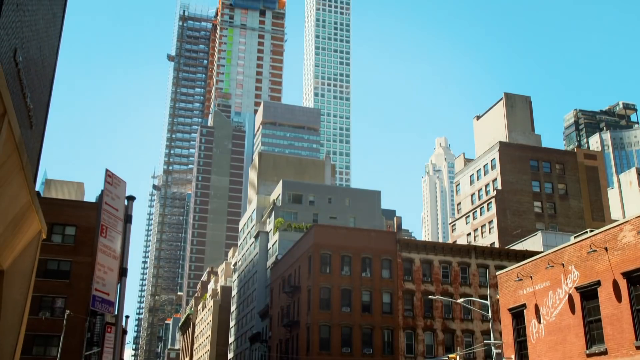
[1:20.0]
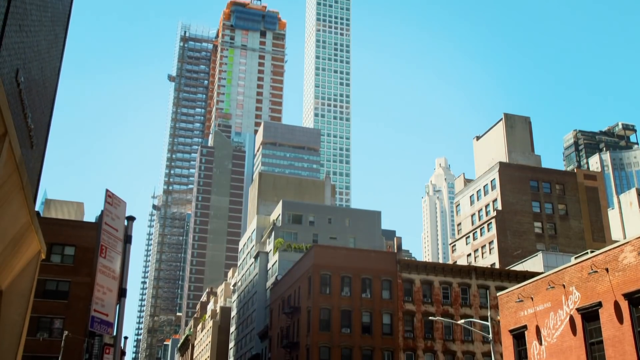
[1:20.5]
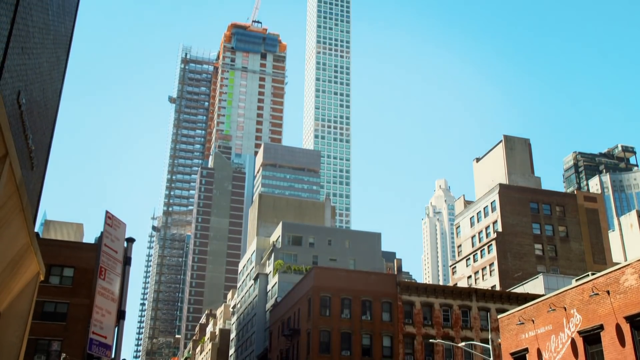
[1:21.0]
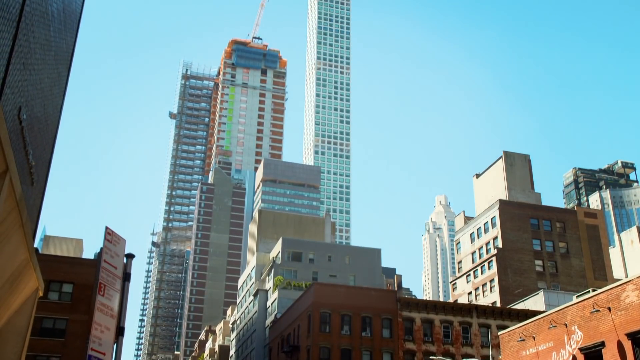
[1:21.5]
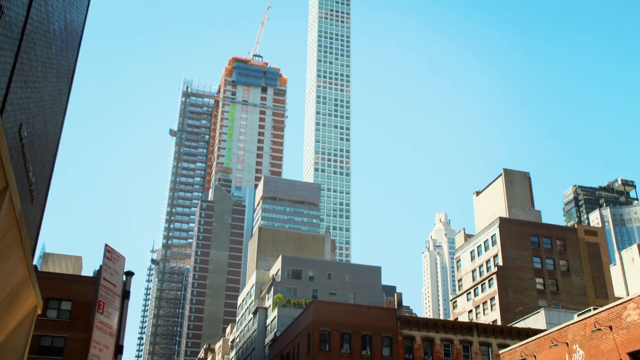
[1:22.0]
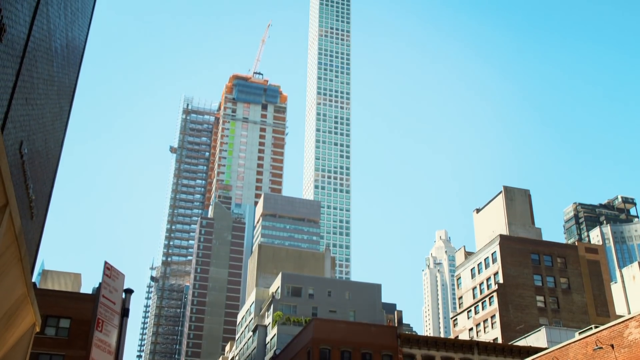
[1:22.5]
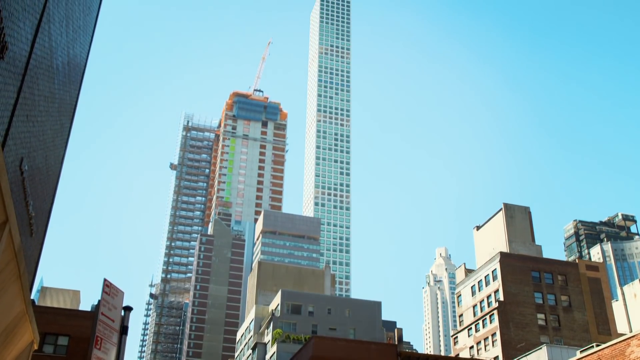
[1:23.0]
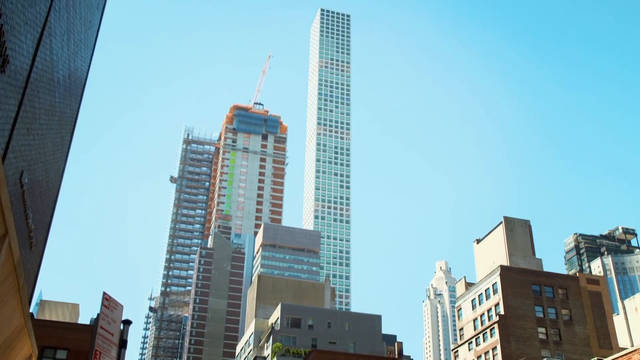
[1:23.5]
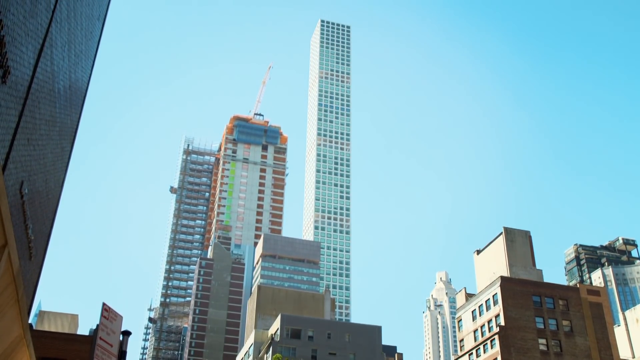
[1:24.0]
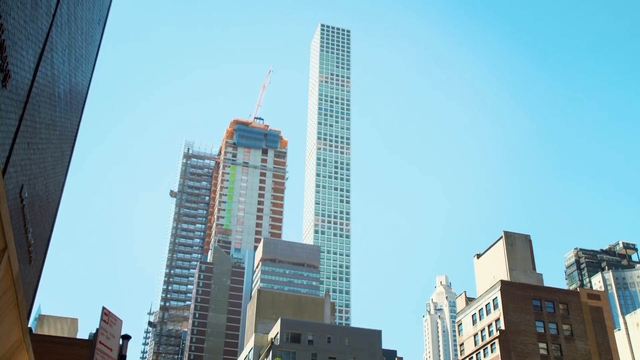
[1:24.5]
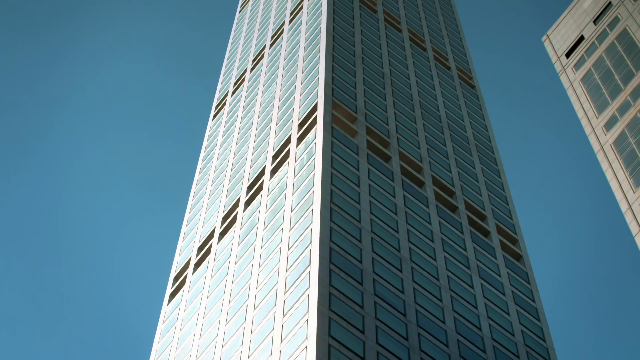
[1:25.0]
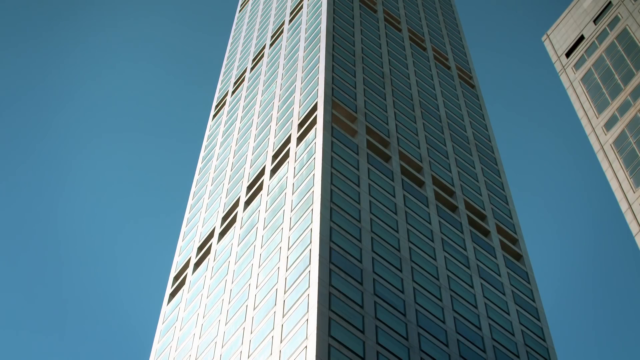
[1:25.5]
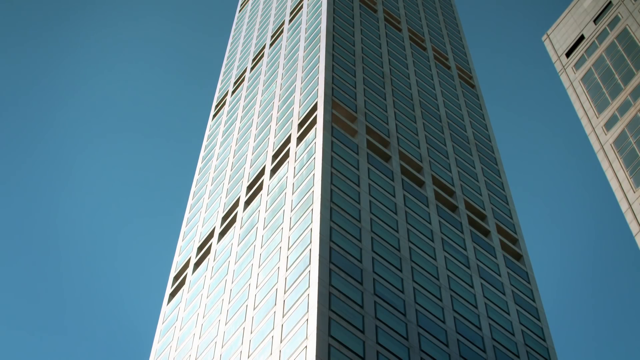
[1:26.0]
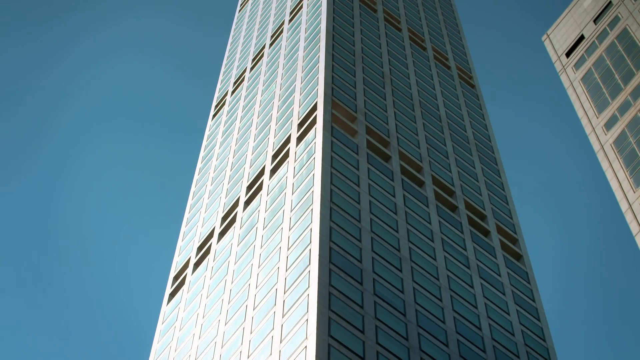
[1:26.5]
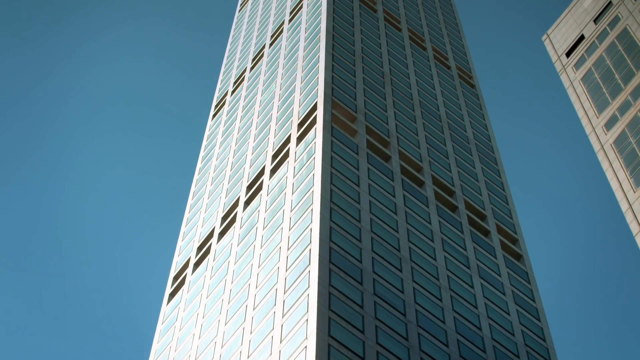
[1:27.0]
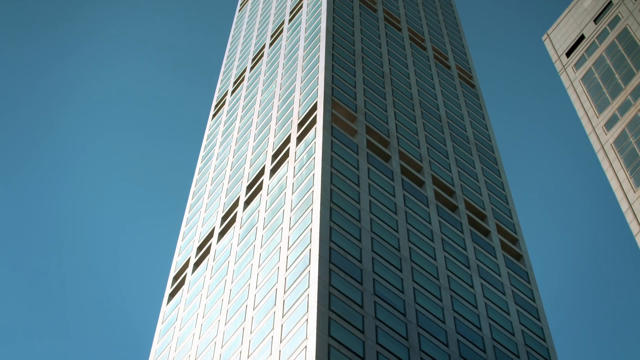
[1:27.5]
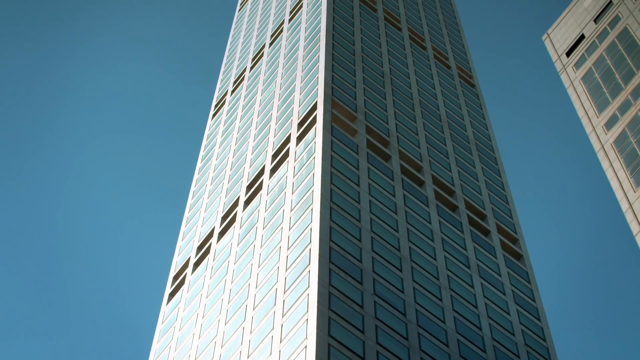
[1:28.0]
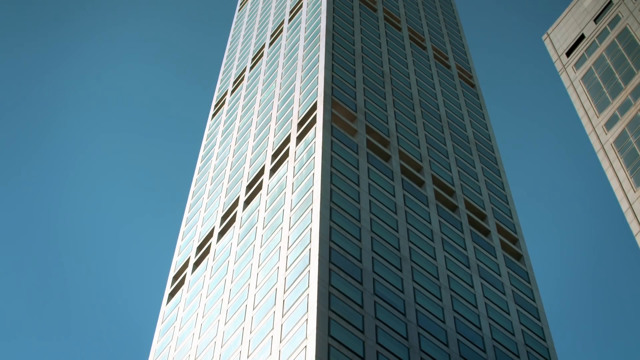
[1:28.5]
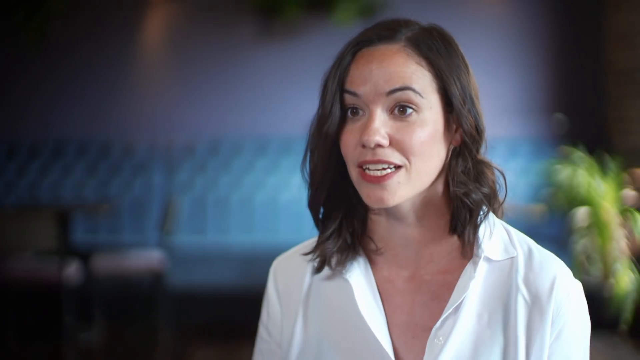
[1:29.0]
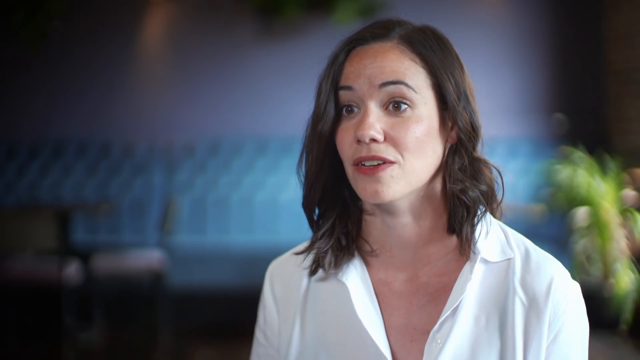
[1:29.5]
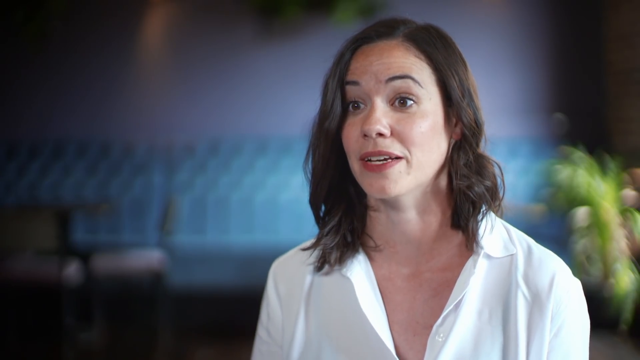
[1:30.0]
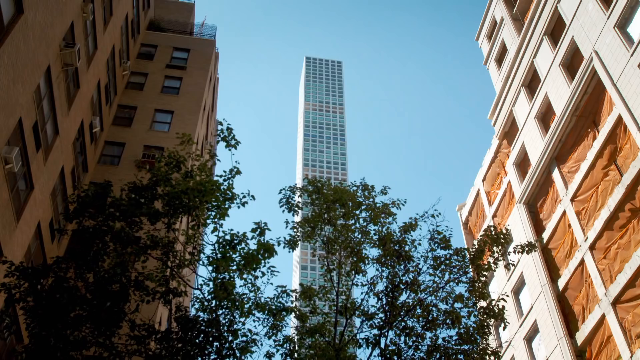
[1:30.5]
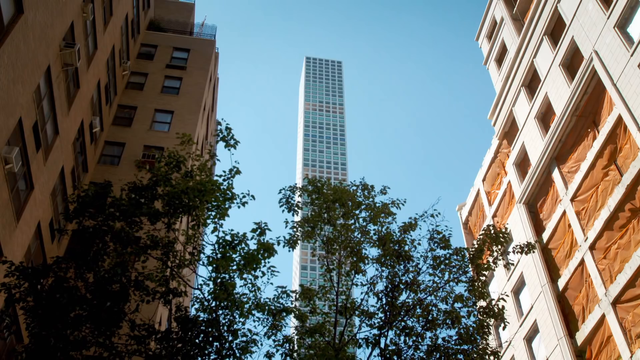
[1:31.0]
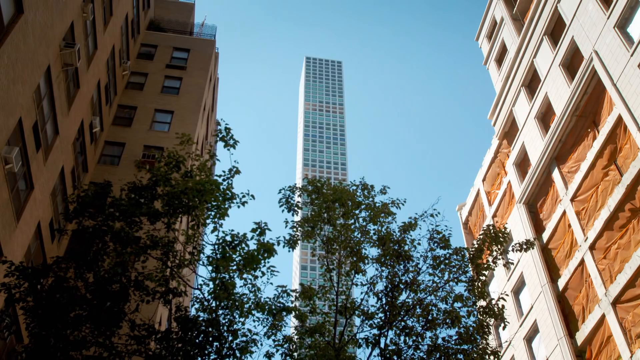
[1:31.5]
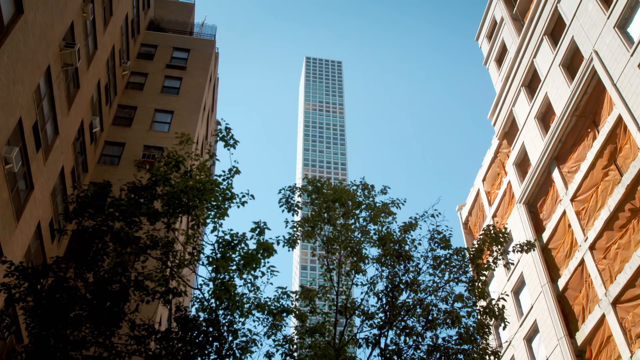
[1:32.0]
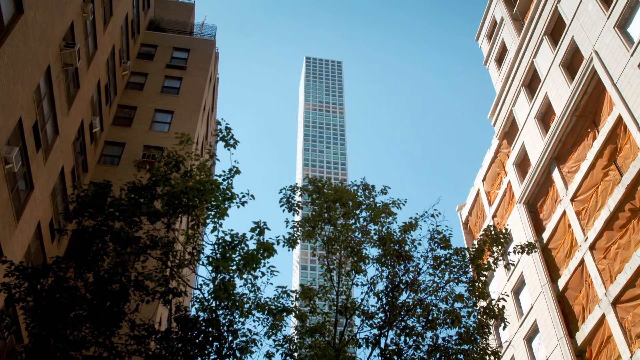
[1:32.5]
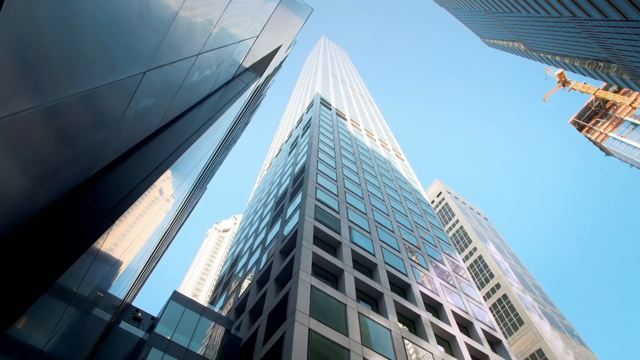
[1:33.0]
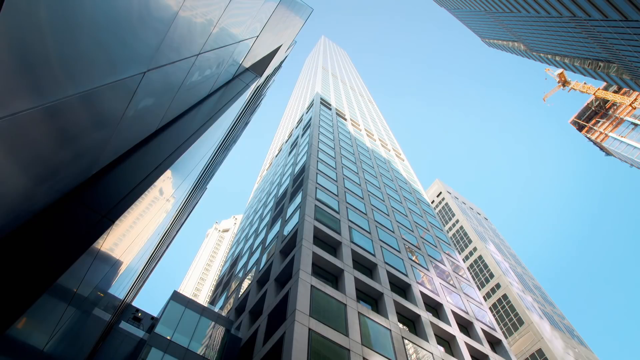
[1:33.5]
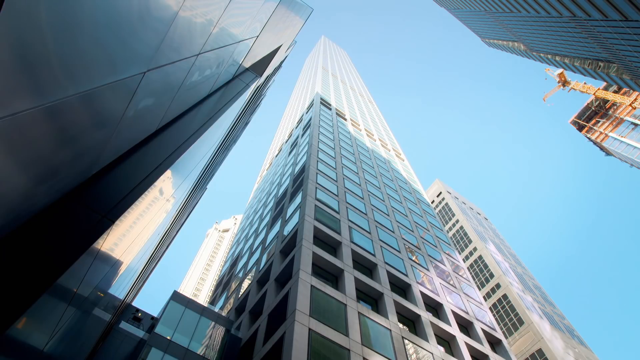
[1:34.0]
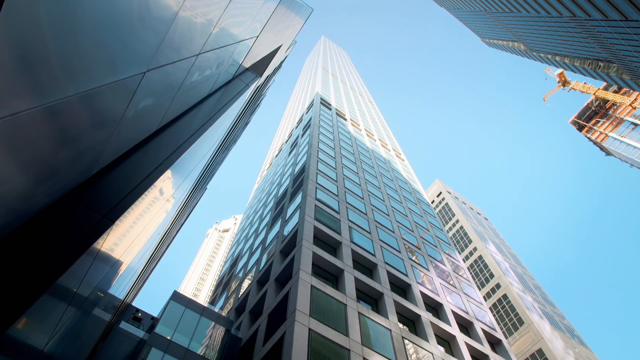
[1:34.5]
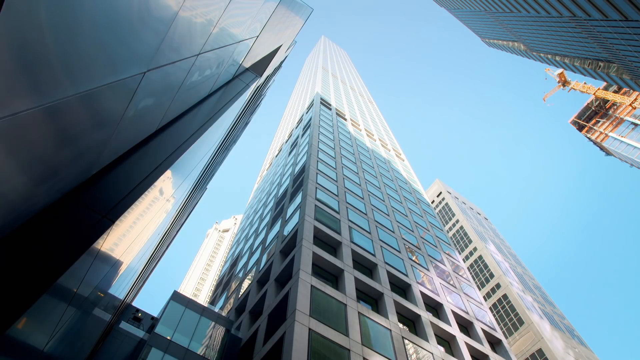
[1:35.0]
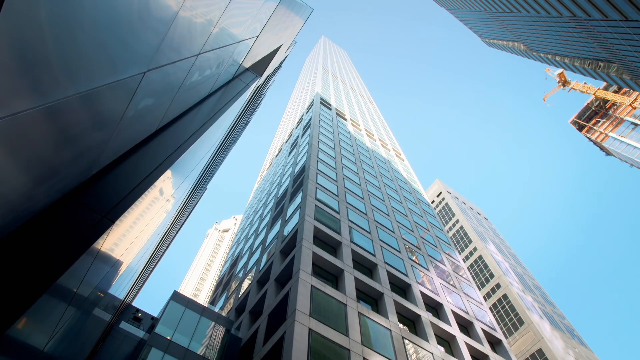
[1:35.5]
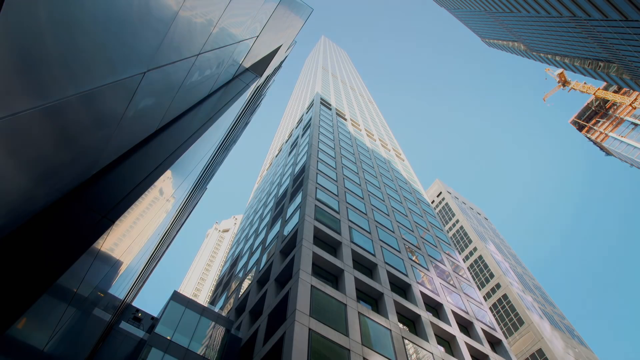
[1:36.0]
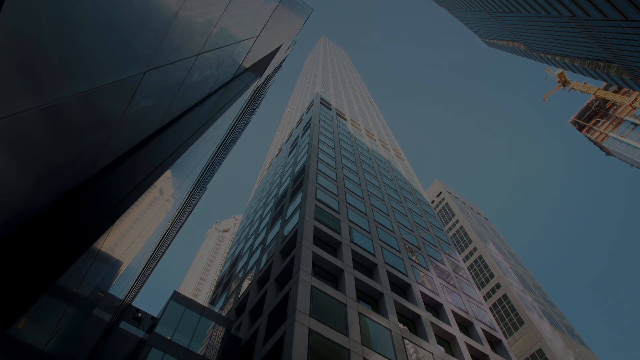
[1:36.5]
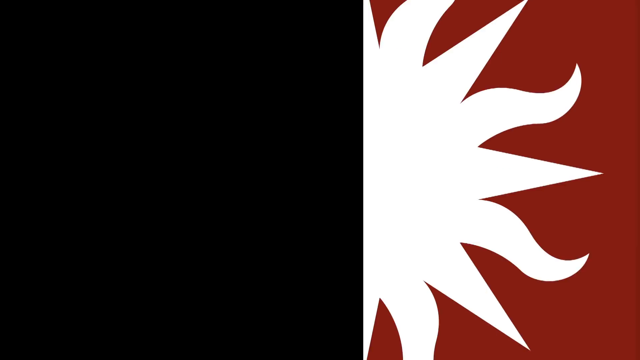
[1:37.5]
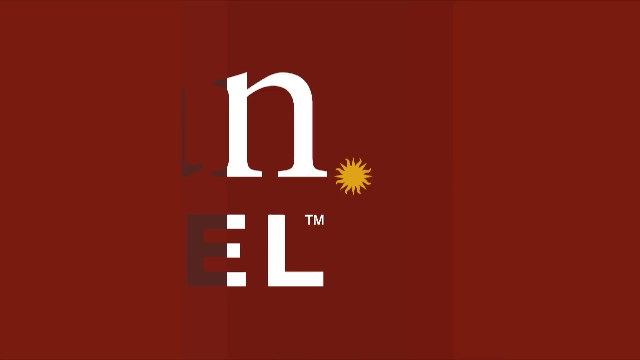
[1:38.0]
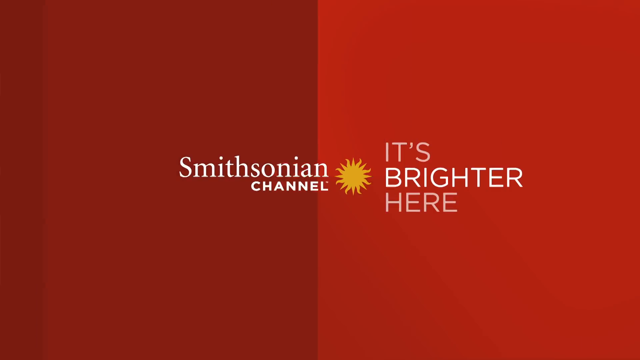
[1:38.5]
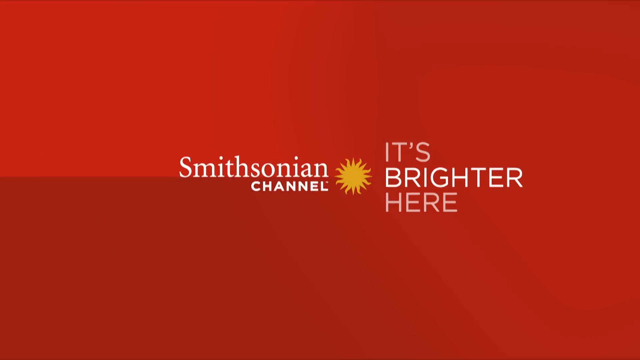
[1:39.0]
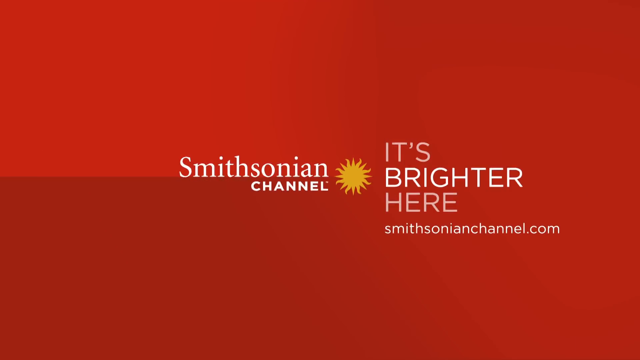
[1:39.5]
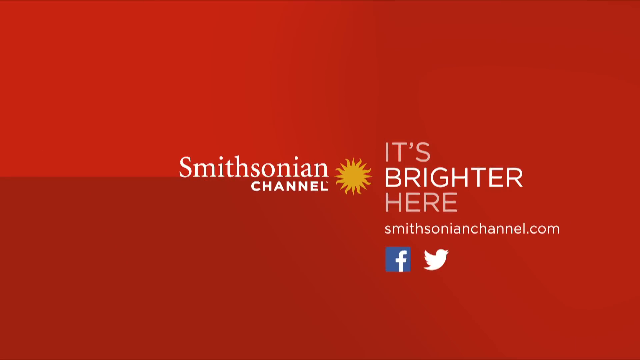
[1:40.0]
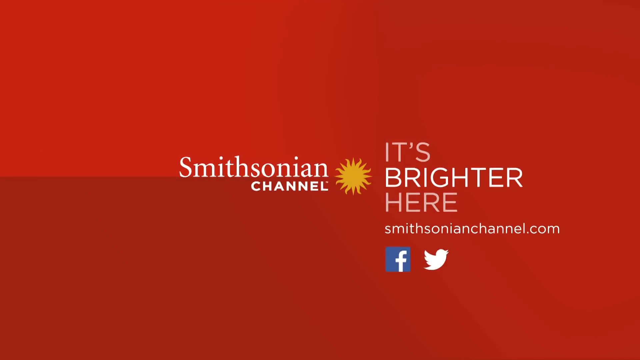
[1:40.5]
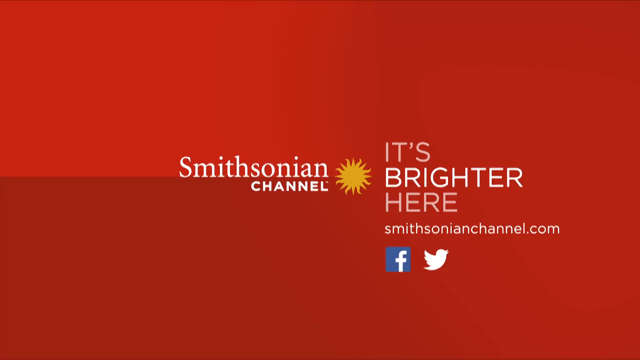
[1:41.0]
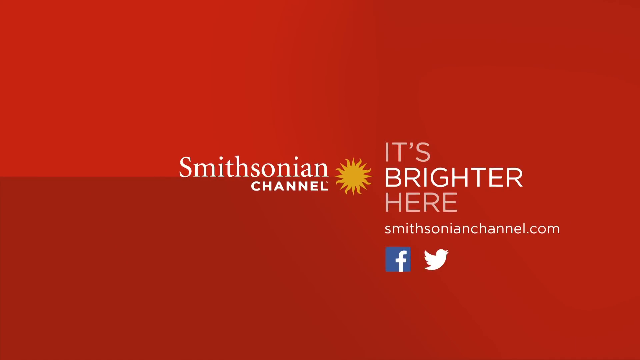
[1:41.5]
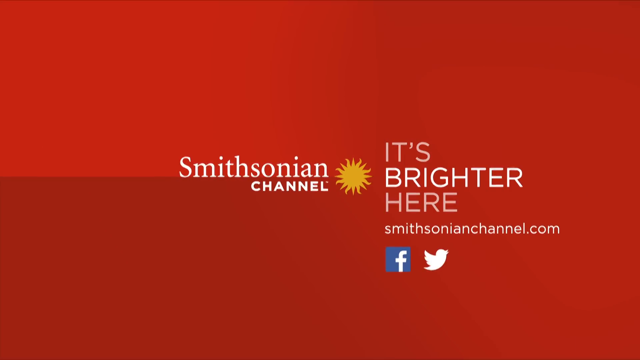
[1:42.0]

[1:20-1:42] In a city, the camera pans up to some skyscrapers. There are lower buildings on the left and right and a cluster of four taller buildings, of which the one furthest right is much taller. This very tall skyscraper is very plain, with many square windows all around it in various colors: possibly a row tinted green, some that occasionally look almost tinted red, and some much paler, possibly because of how the sun is shining. The sky is blue with no clouds. The building is then seen from maybe its middle point, where the windows appear wider, like rectangles.